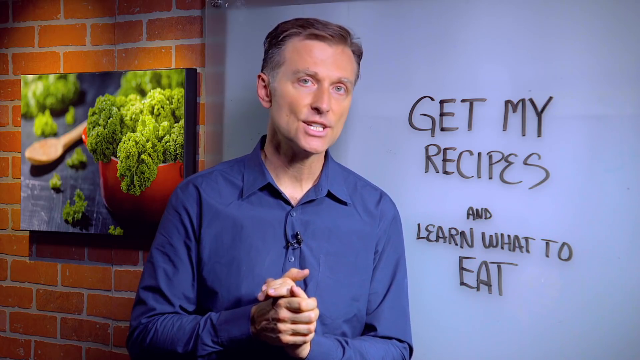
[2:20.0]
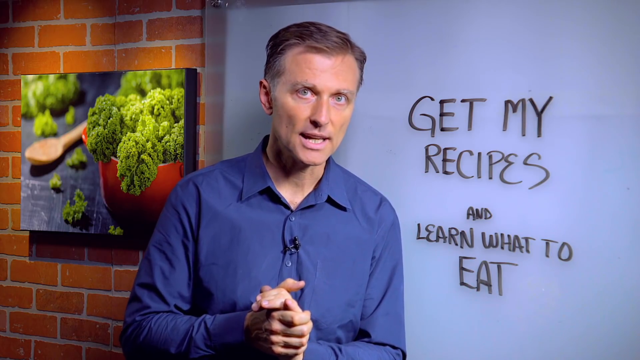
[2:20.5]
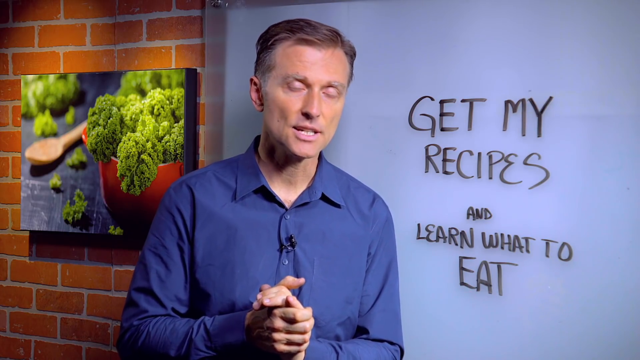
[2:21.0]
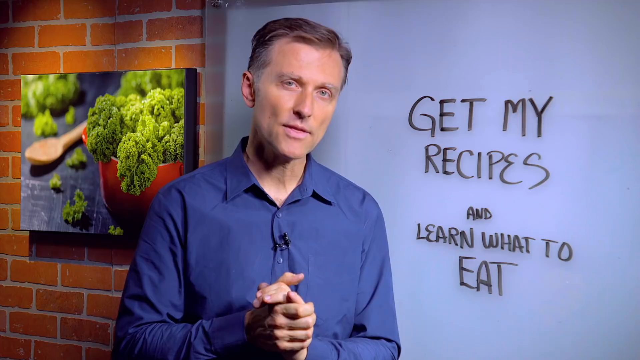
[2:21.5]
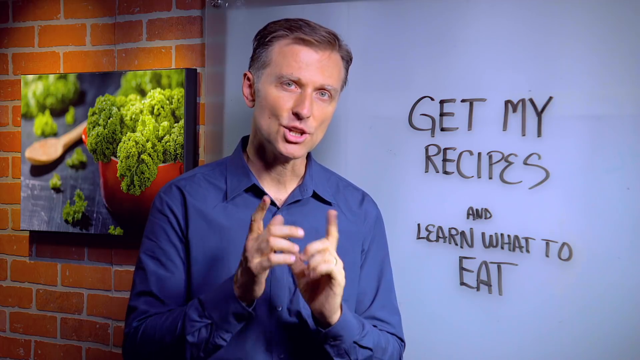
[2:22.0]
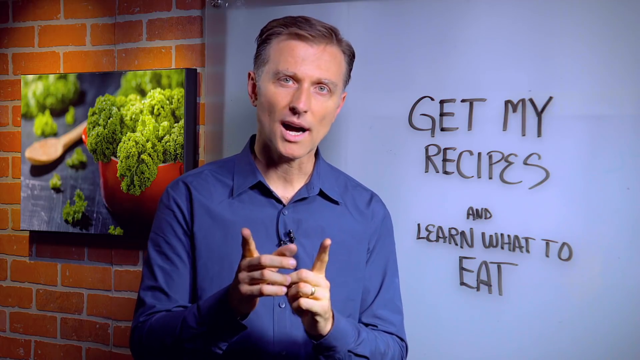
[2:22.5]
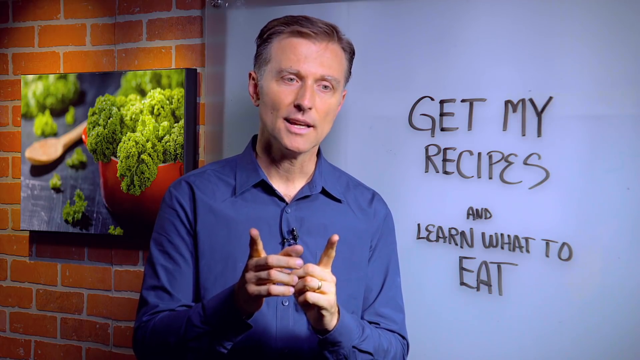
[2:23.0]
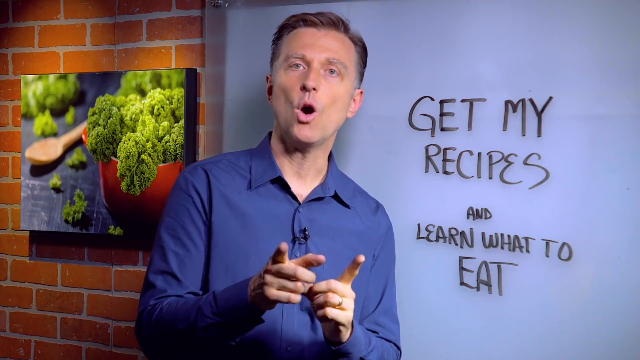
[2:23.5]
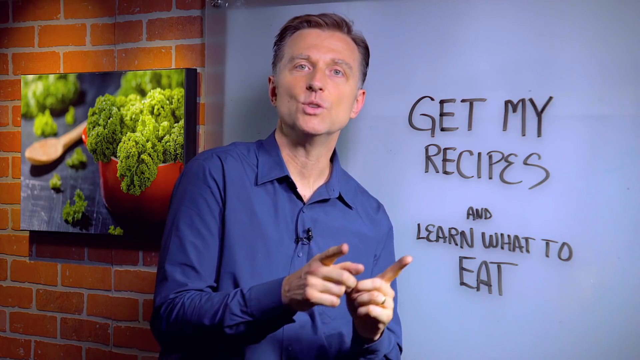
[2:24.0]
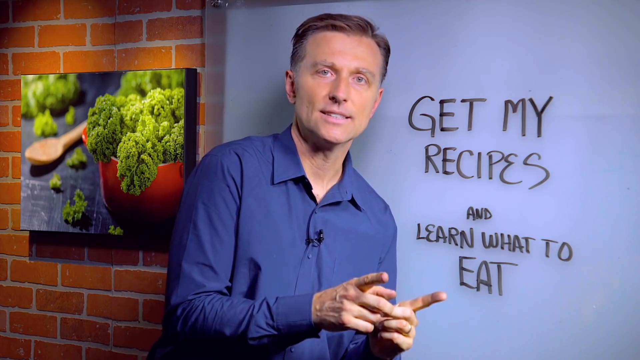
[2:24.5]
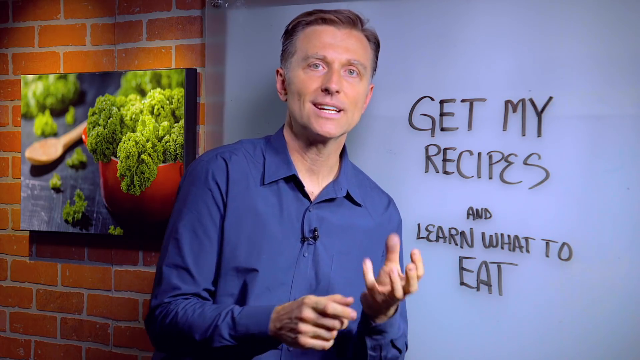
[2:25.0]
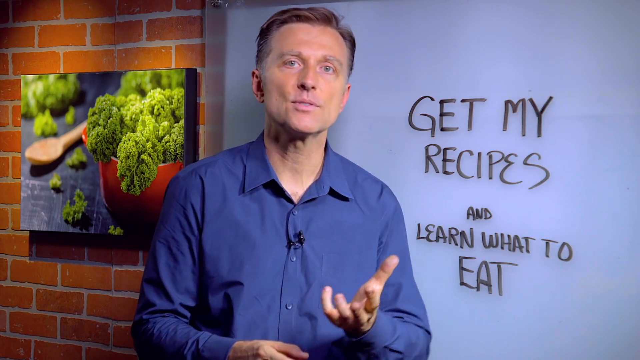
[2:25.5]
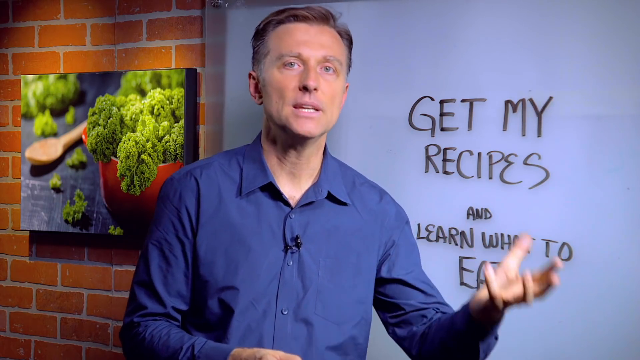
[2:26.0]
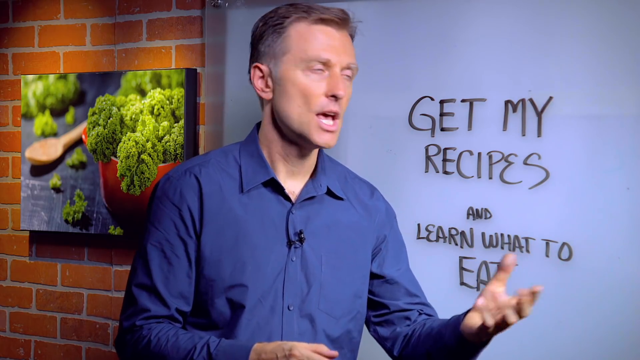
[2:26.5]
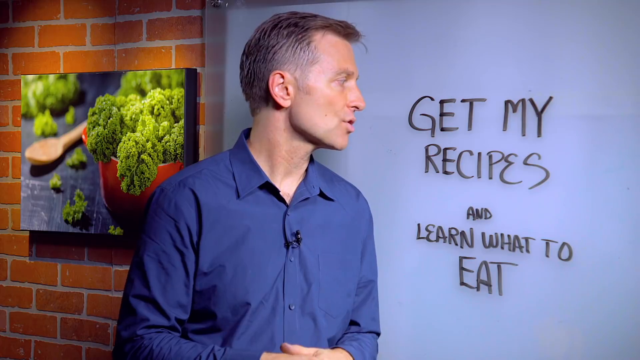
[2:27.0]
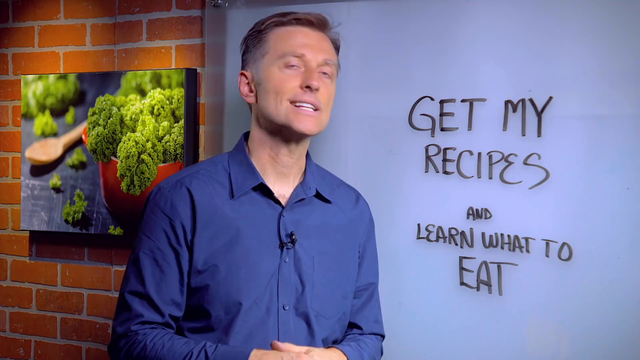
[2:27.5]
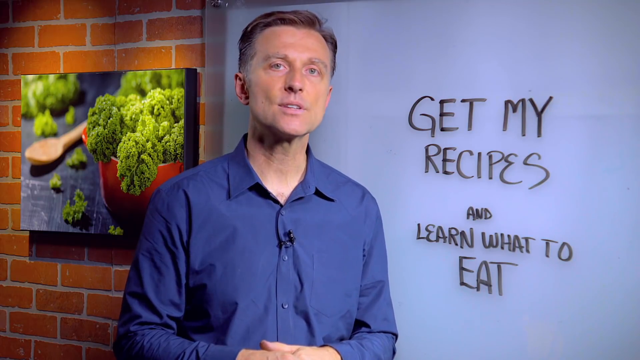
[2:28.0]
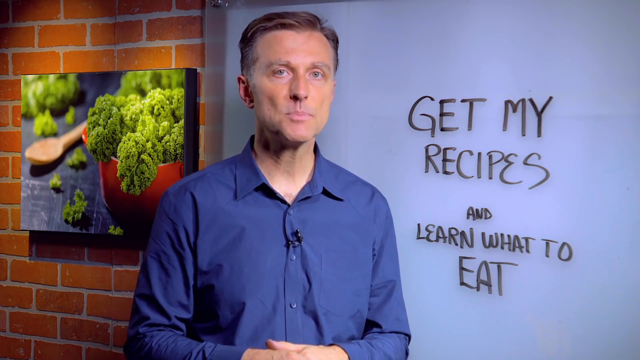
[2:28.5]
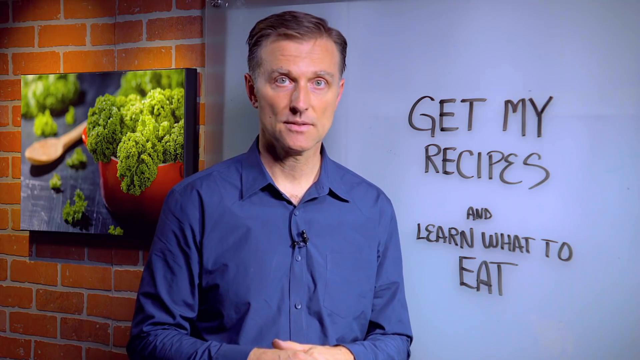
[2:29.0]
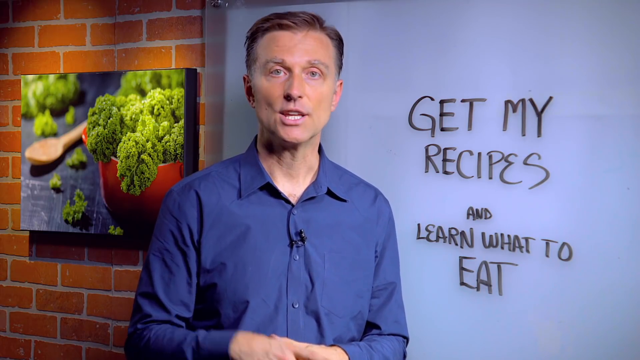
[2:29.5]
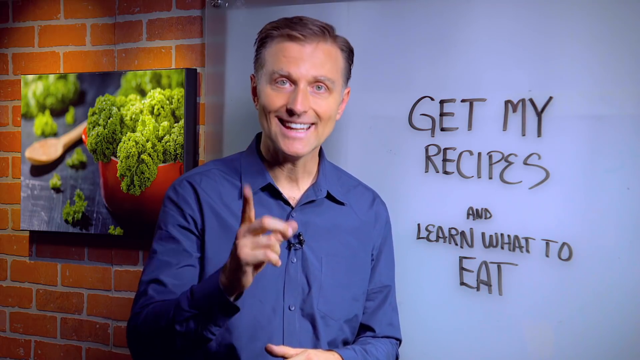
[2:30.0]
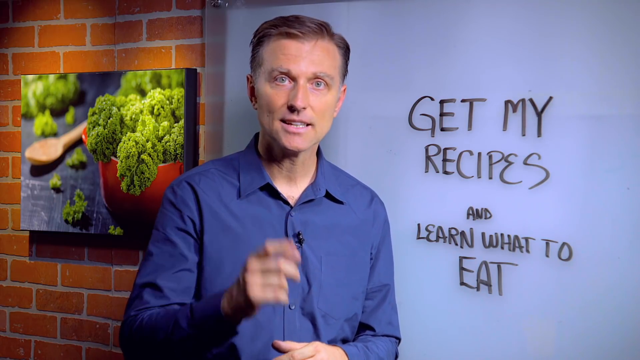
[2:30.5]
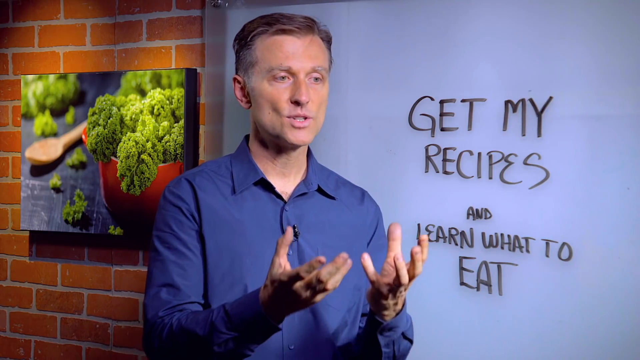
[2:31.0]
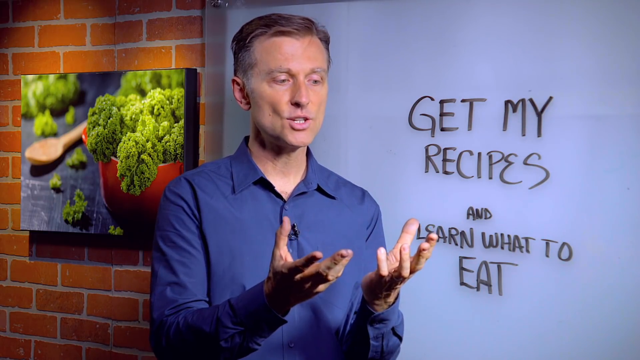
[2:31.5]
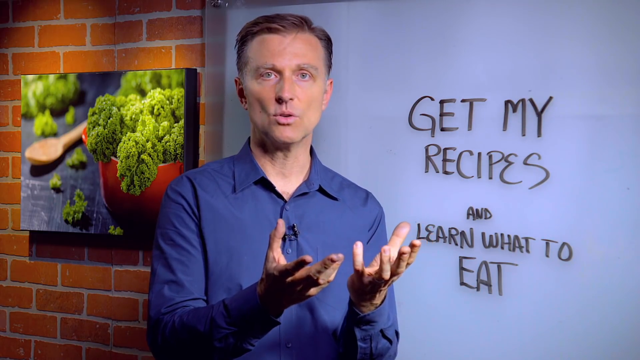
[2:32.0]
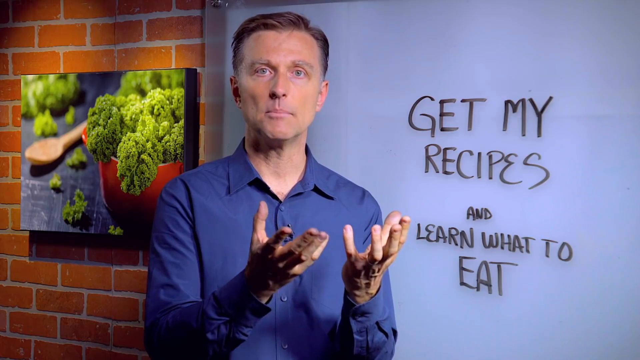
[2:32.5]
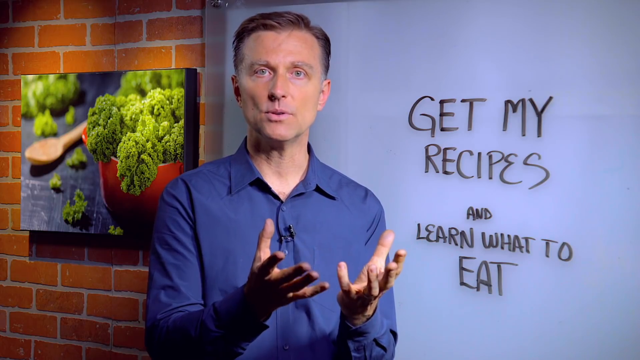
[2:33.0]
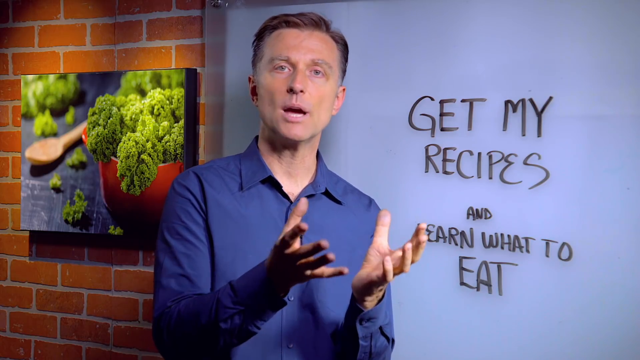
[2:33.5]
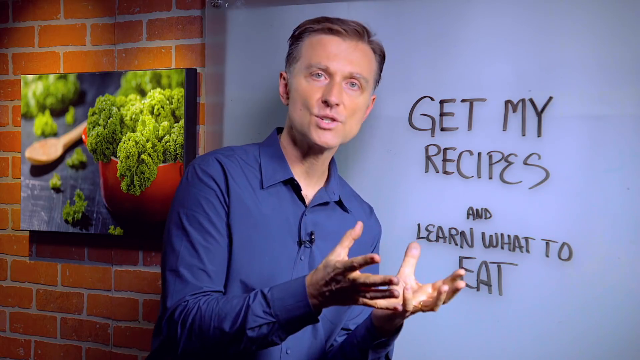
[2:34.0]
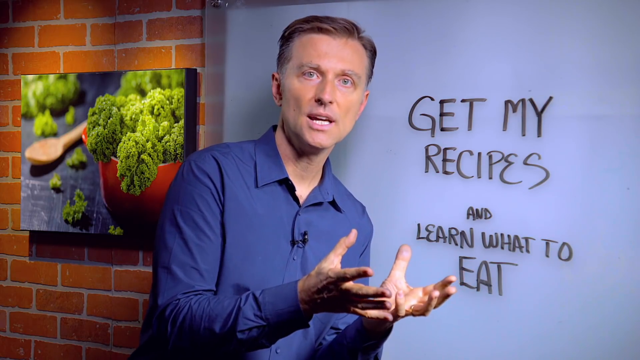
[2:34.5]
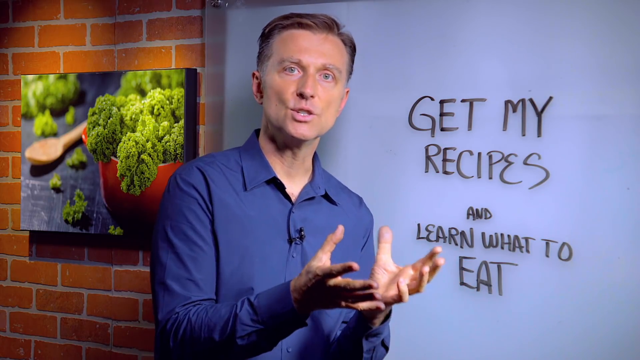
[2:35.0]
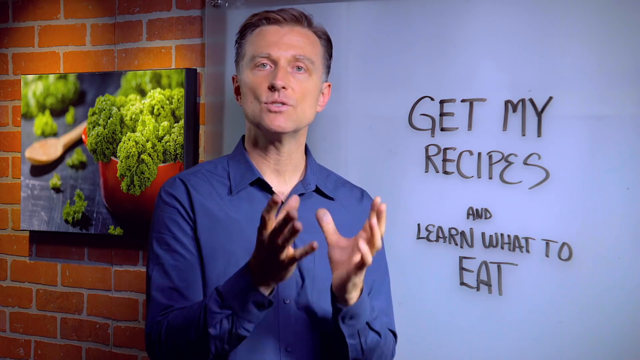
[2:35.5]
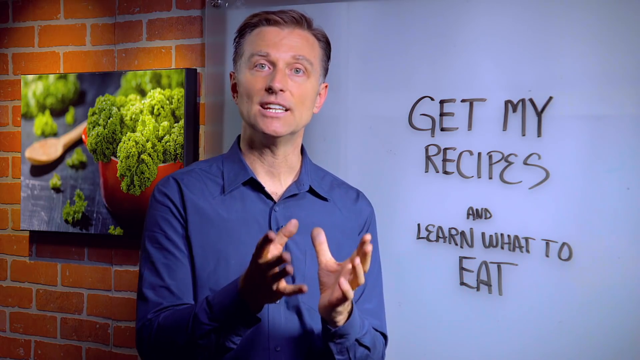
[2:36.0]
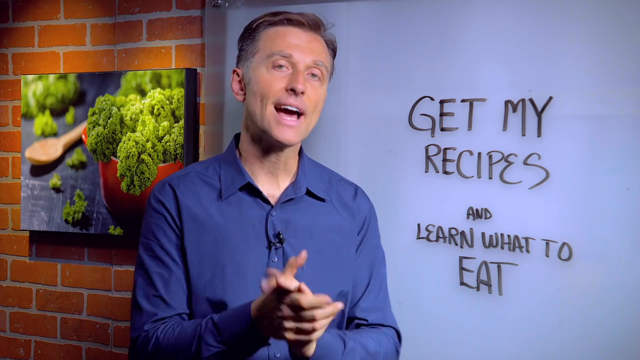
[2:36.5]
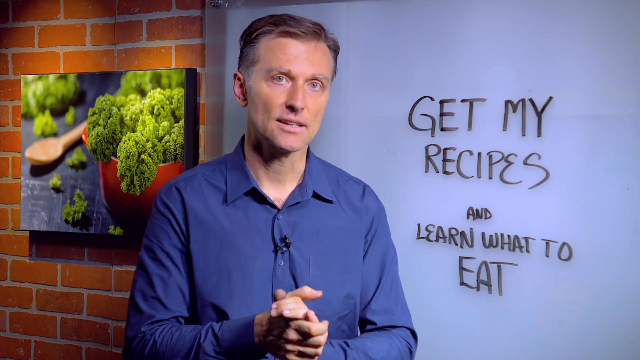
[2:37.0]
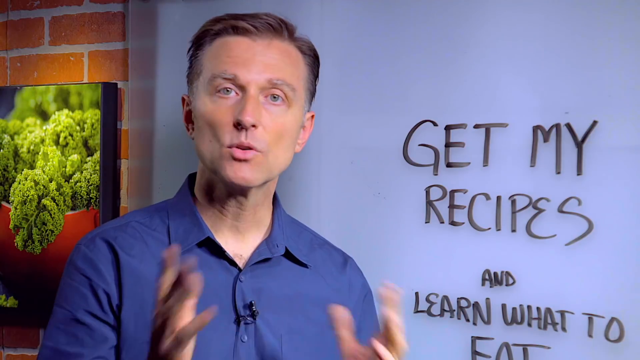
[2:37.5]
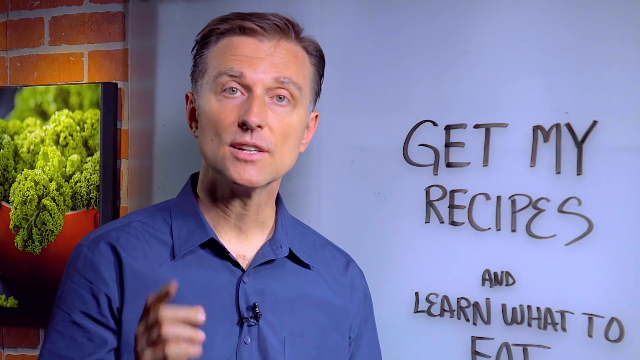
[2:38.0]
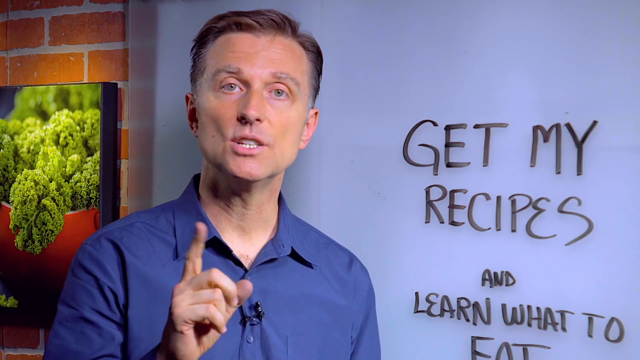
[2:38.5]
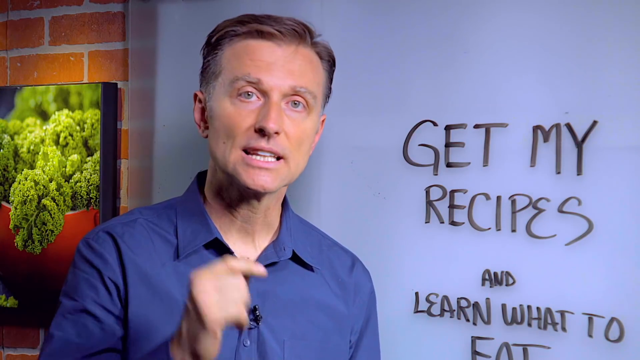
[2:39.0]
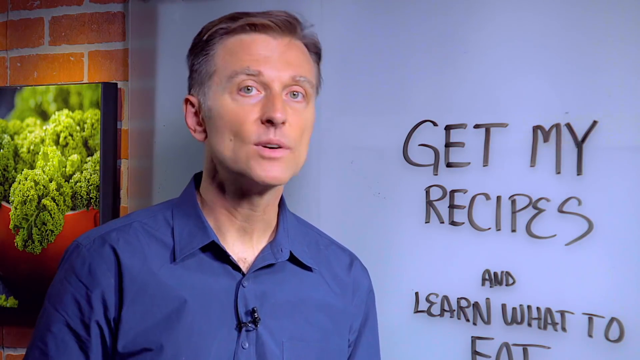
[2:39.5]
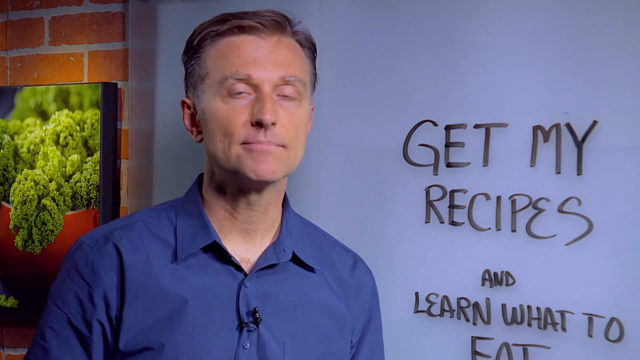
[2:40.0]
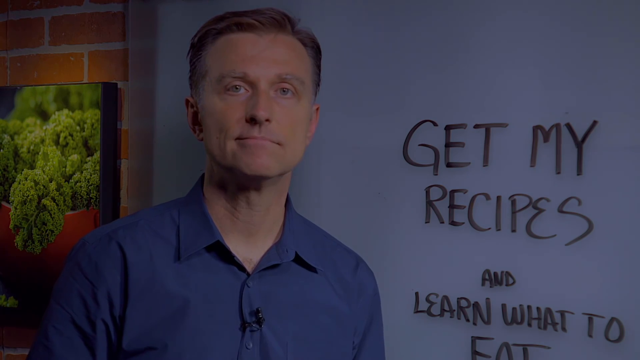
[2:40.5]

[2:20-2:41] The same shot shows the man standing in front of the whiteboard, with the picture of the broccoli still visible on the brick wall on the left-hand side. The whiteboard has been erased and now simply says "get my recipes and learn what to eat" in big black bold letters. His hands are clasped at first, then he unclasps them and keeps gesturing as he talks, sometimes with open hands and sometimes holding them together. He looks back and forth to the whiteboard a few times. The camera zooms in on him at the end, and then the video fades to black.